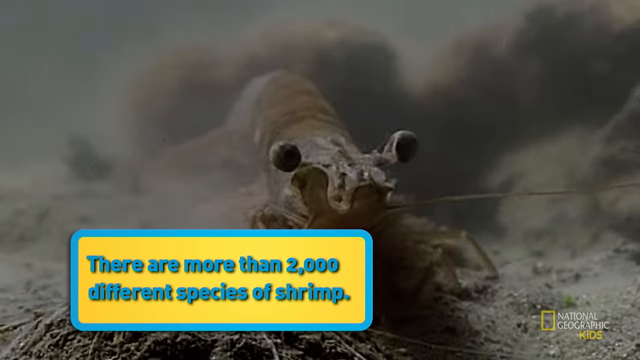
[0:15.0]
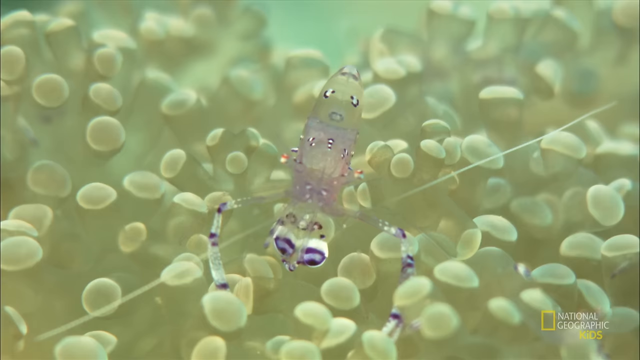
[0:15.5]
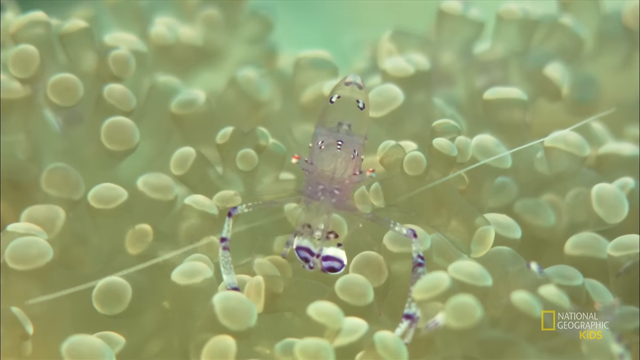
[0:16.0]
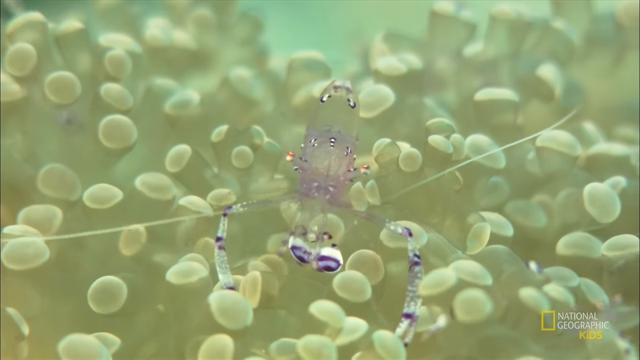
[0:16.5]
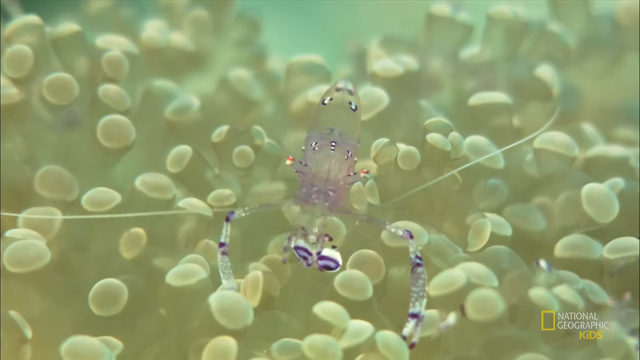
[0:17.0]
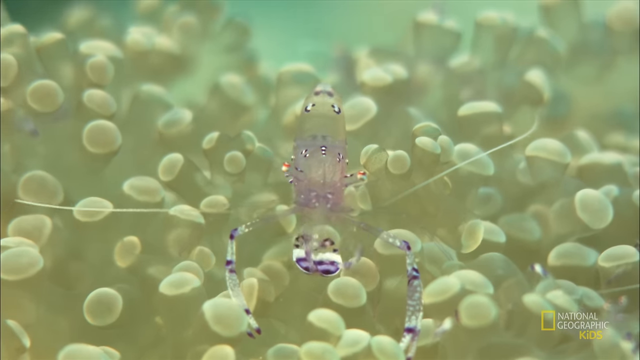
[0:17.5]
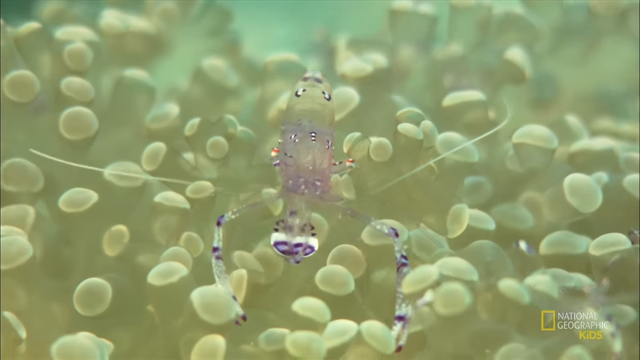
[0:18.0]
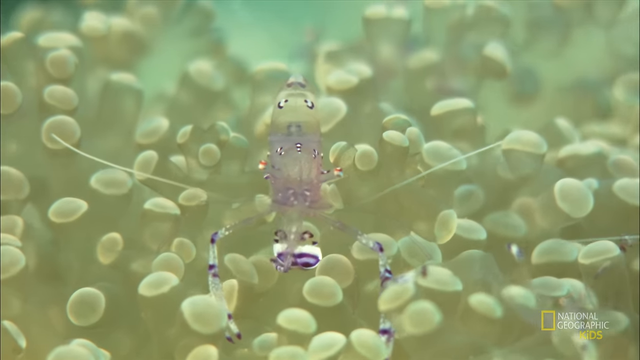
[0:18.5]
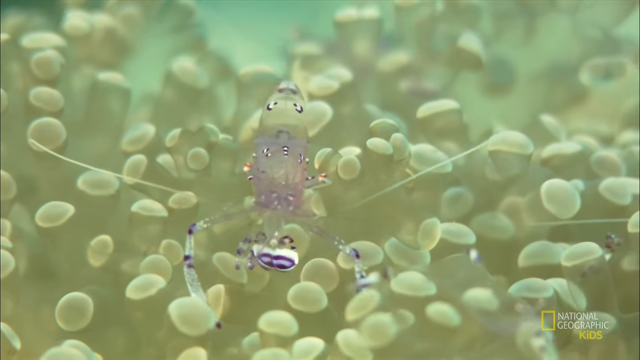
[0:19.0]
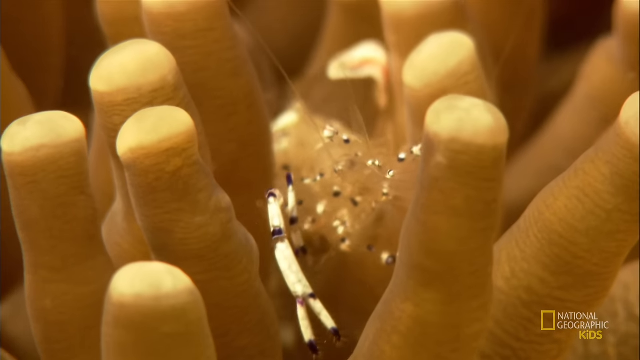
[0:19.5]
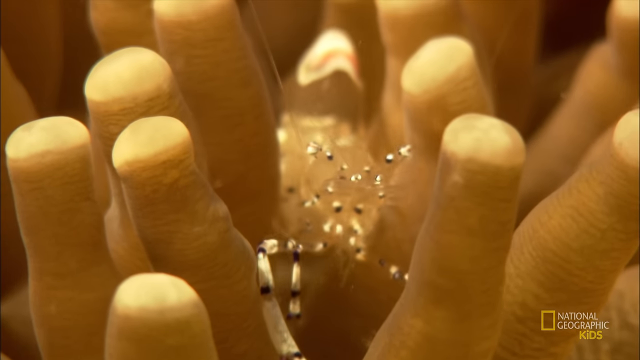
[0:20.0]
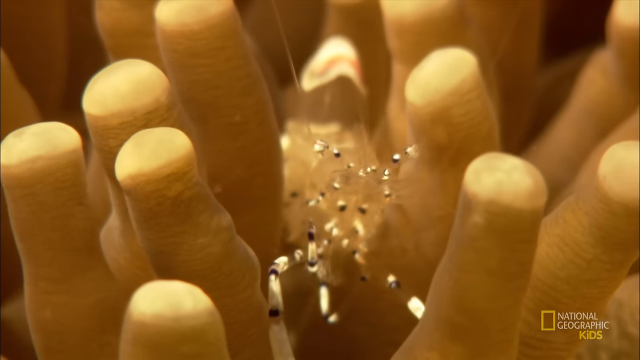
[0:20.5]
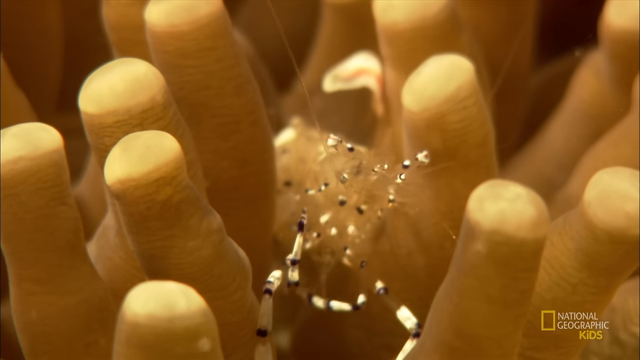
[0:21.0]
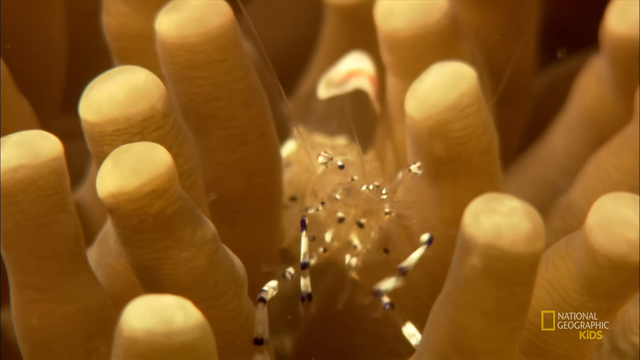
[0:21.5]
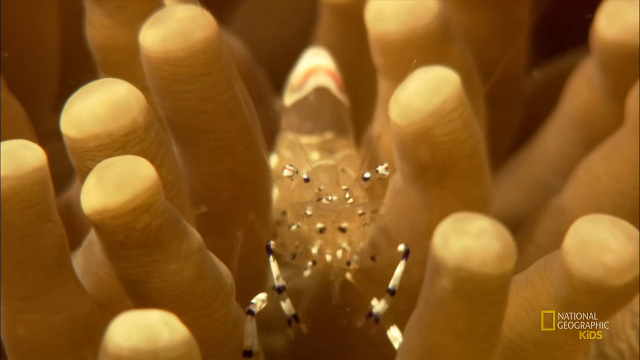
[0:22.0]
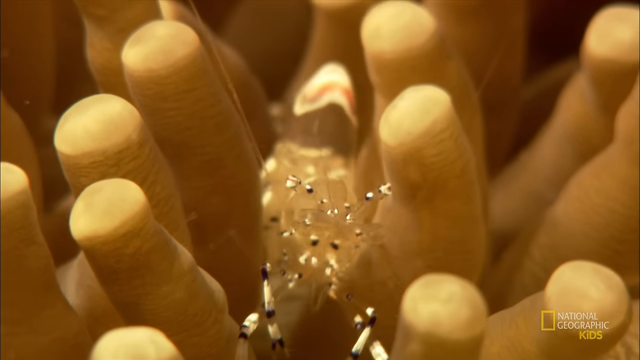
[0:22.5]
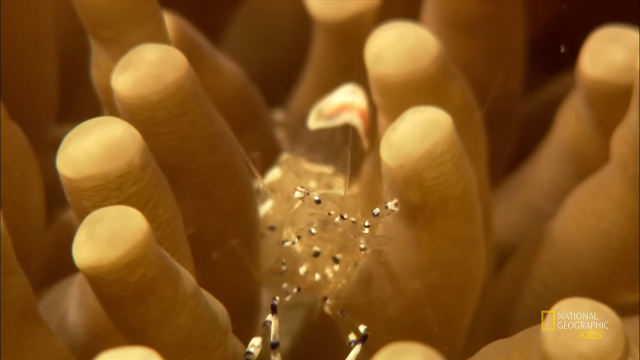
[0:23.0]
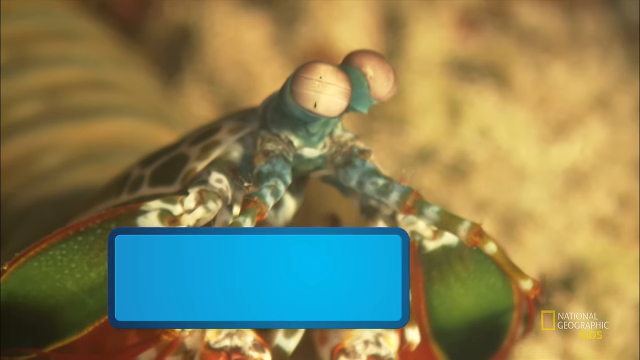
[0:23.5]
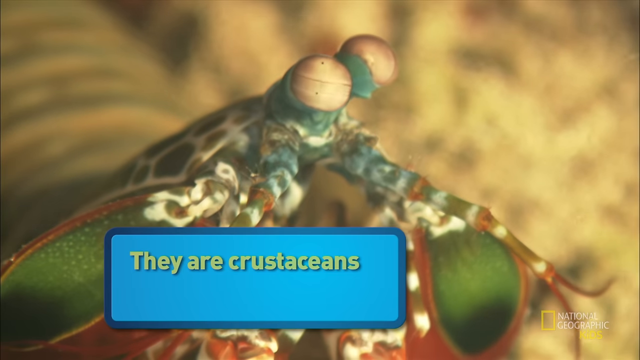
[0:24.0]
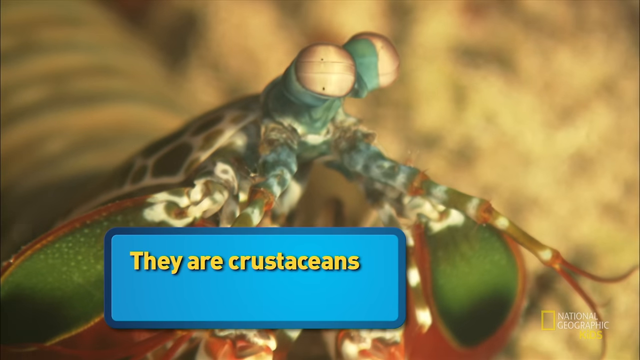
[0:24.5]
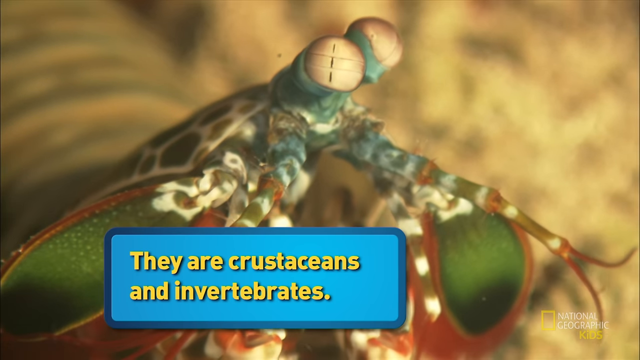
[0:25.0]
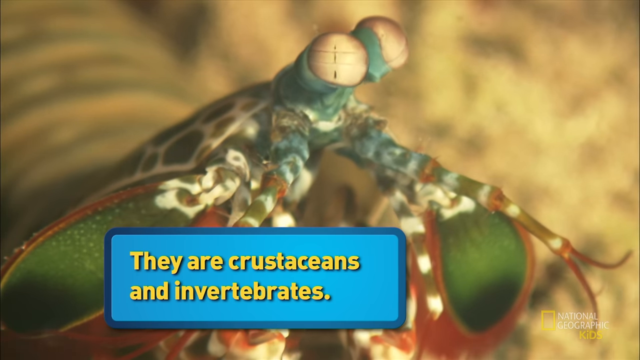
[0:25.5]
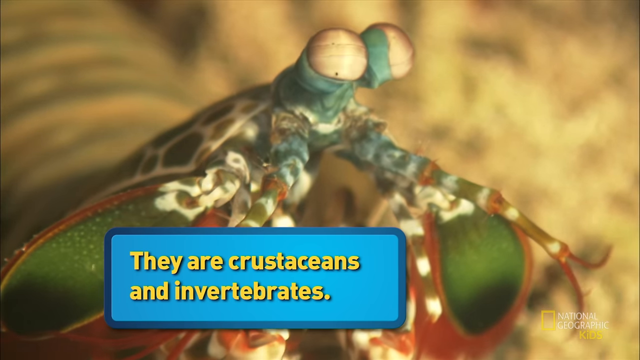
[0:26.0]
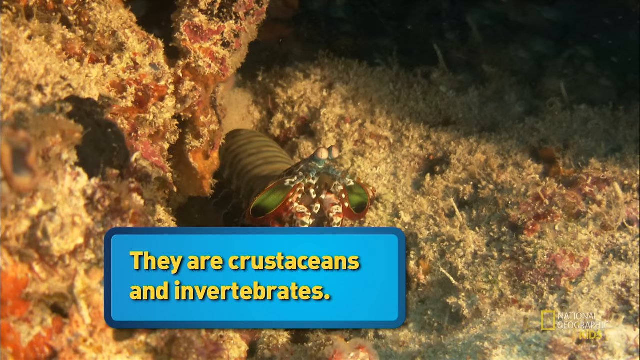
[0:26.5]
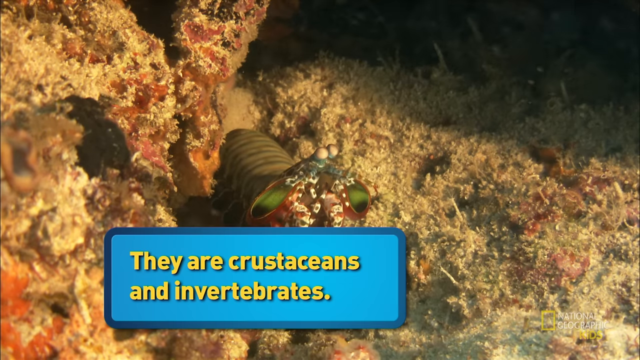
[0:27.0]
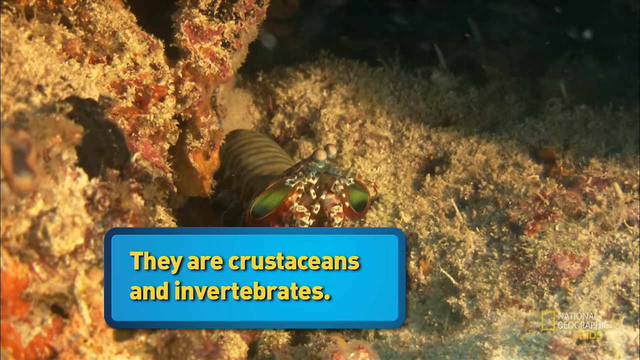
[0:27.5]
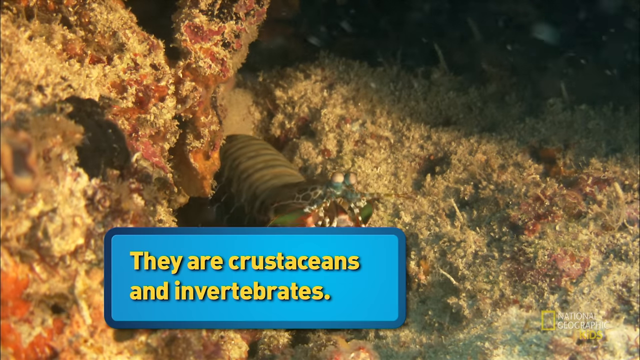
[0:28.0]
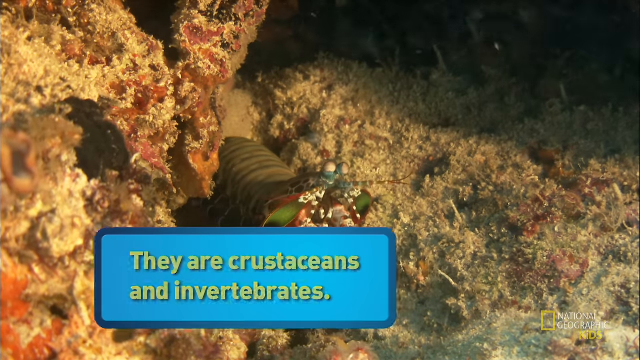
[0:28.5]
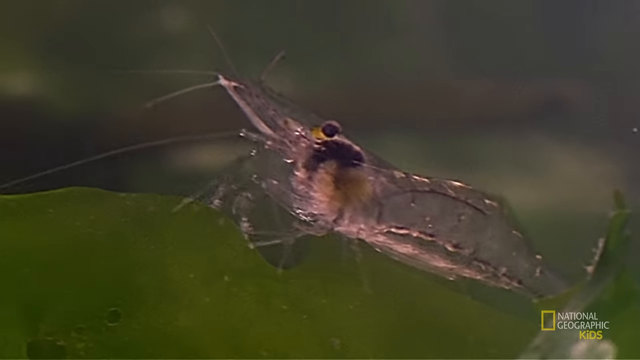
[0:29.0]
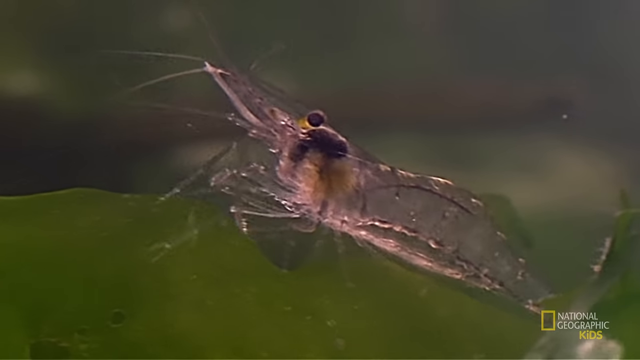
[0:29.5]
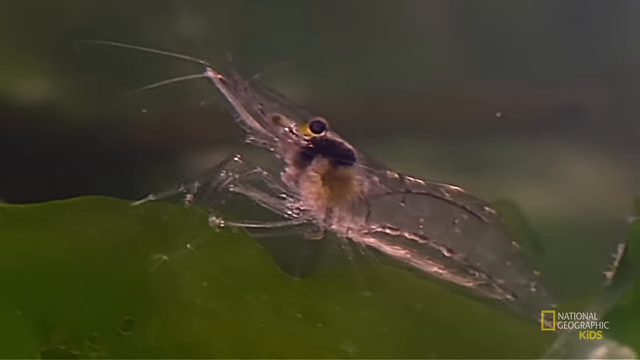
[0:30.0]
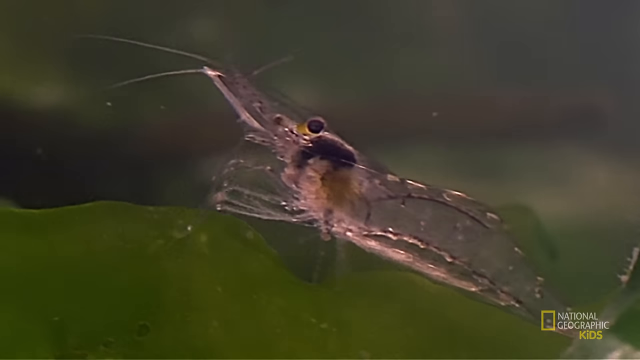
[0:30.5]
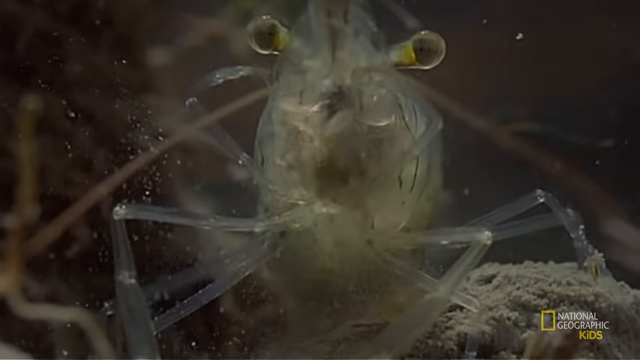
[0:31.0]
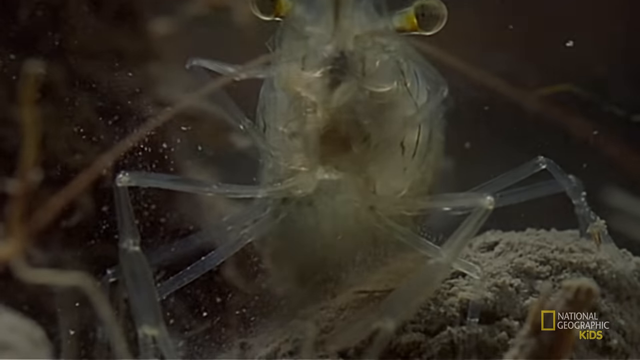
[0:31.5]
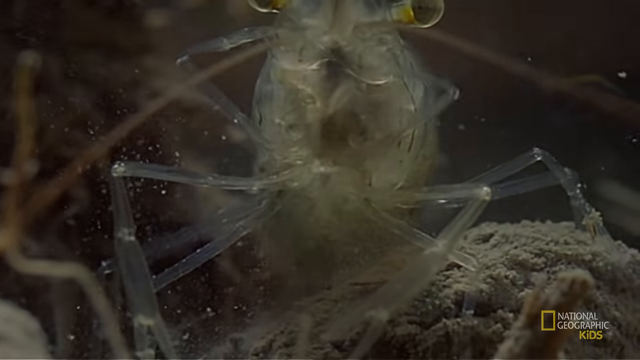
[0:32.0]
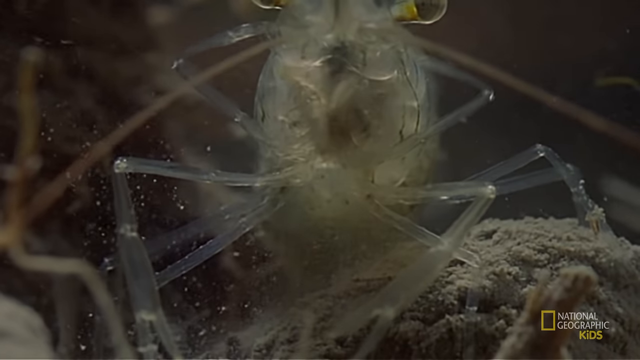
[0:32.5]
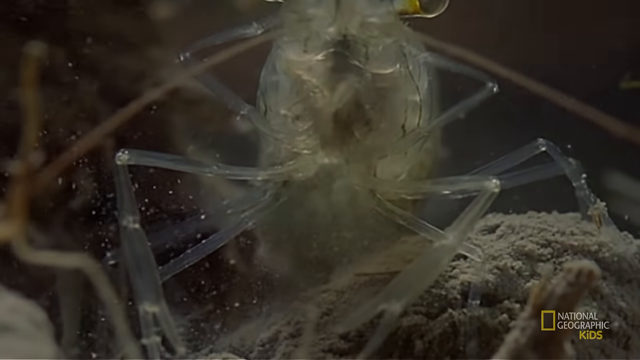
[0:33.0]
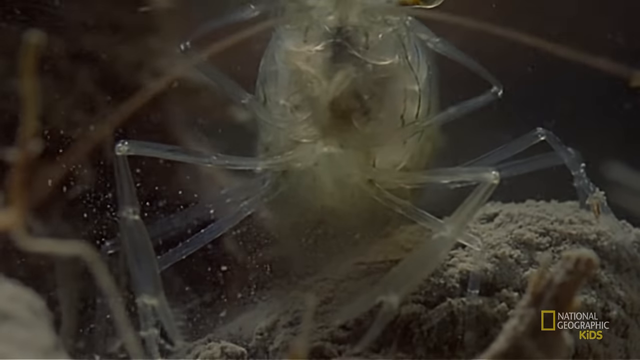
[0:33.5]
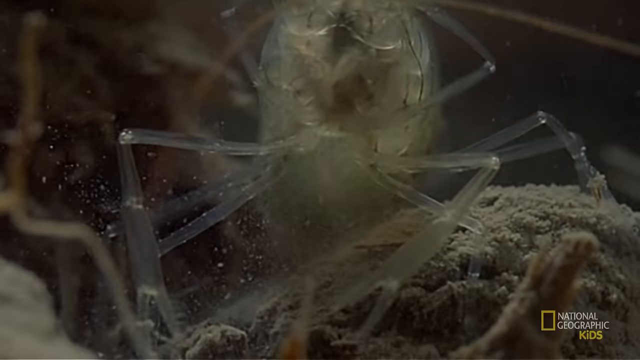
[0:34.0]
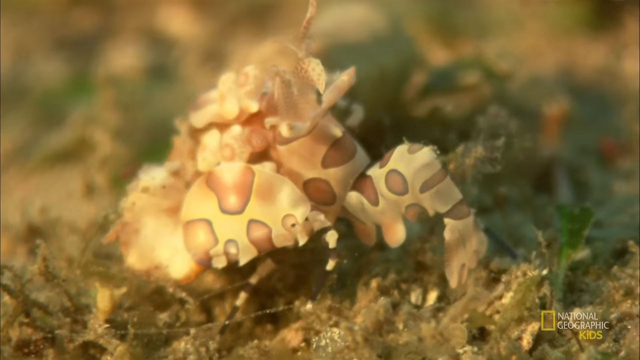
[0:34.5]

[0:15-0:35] An amoeba-type sea creature with many little fingers coming out of it appears, and a translucent shrimp seems to be walking through it, moving along the different rows and possibly eating as it goes. The shrimp is almost totally see-through, with a few black splotches on its body and tiny black eyes. A green sea creature is also among the amoeba fingers. Both have buggy eyes: the green one's are big, while the shrimp's are tiny and black but buggy in nature.